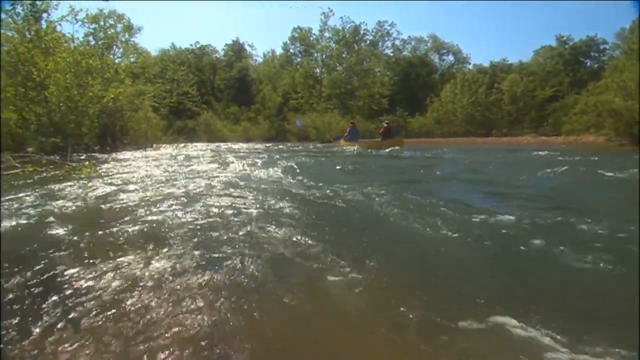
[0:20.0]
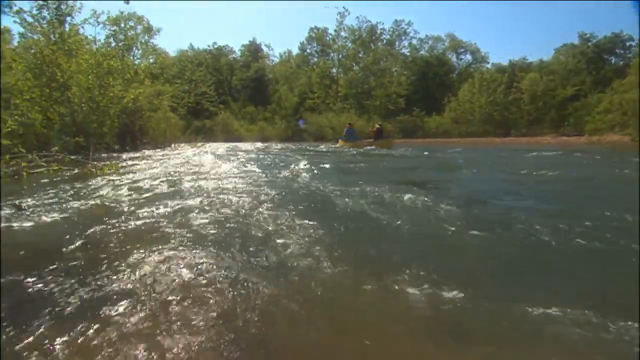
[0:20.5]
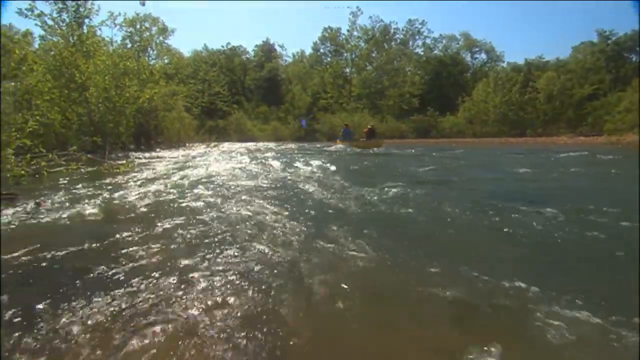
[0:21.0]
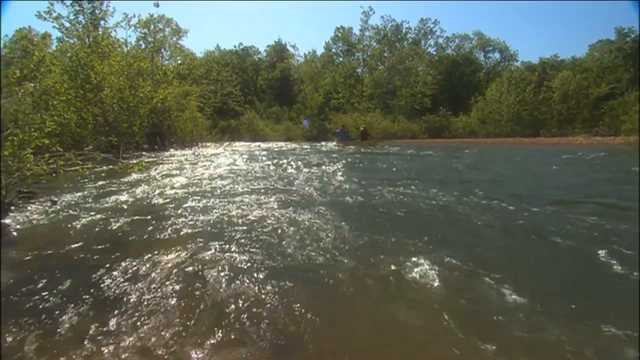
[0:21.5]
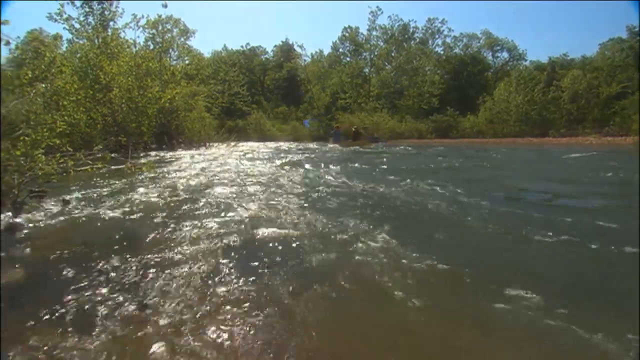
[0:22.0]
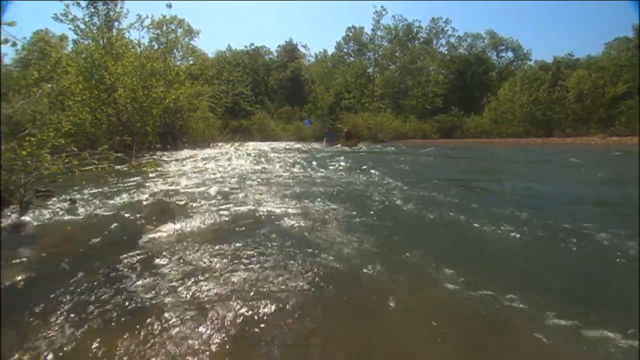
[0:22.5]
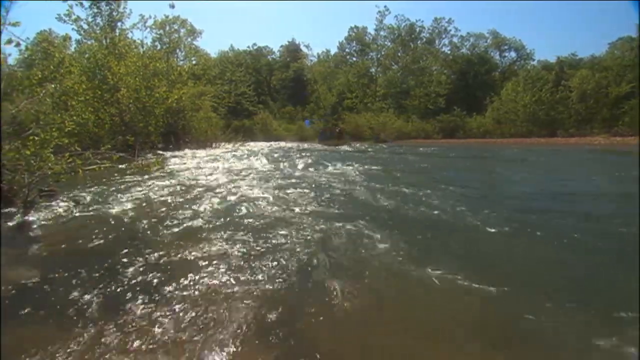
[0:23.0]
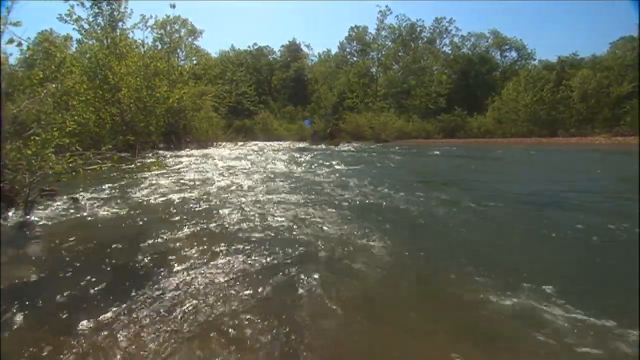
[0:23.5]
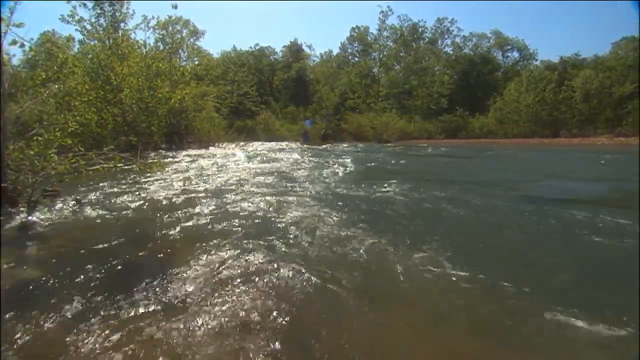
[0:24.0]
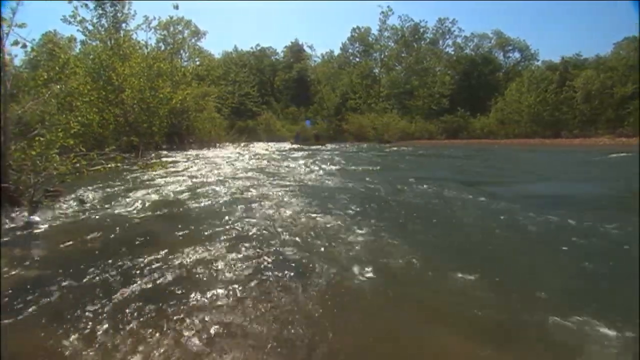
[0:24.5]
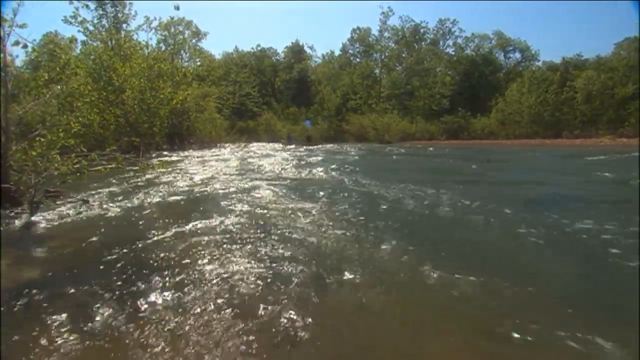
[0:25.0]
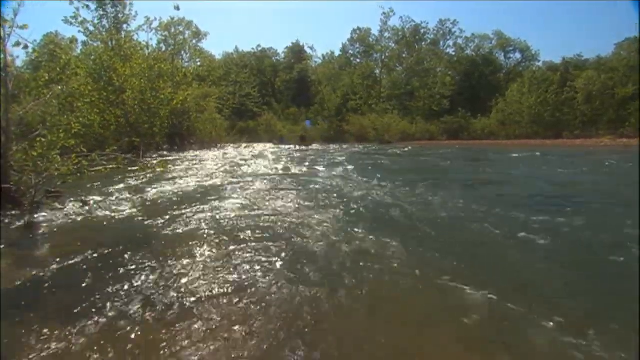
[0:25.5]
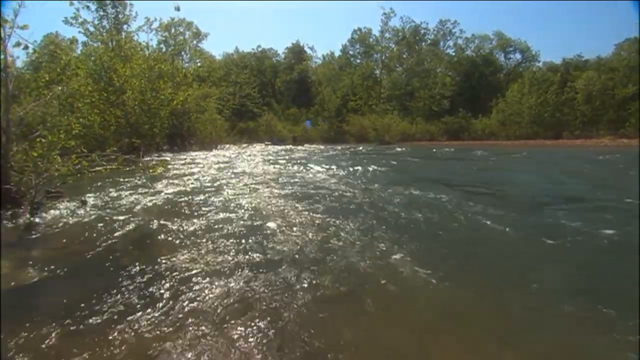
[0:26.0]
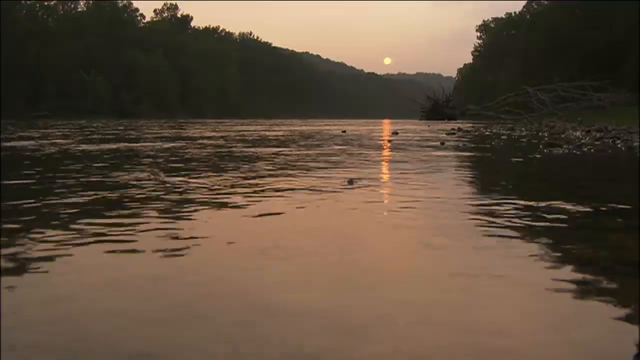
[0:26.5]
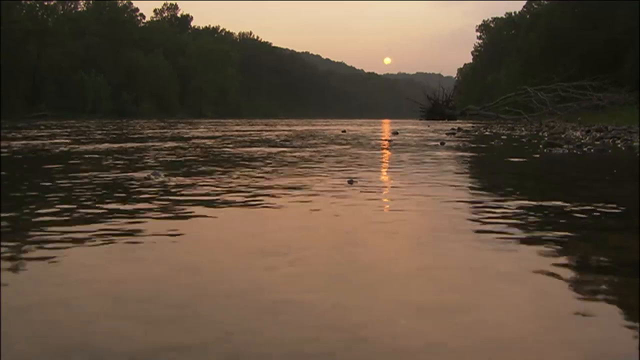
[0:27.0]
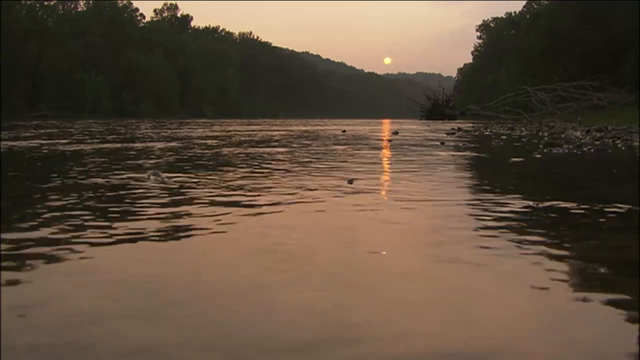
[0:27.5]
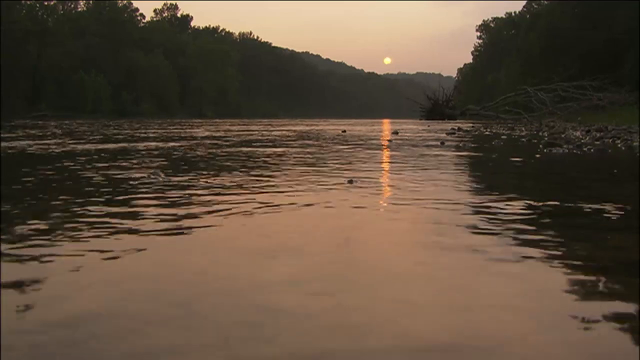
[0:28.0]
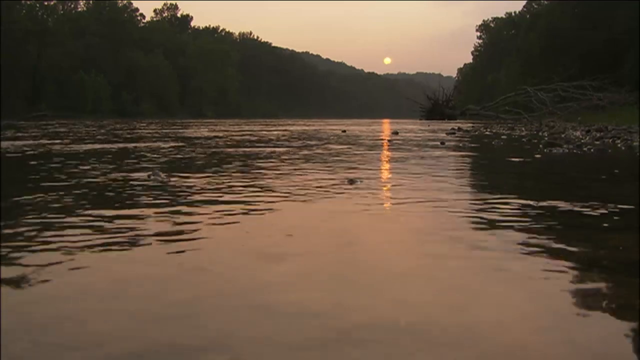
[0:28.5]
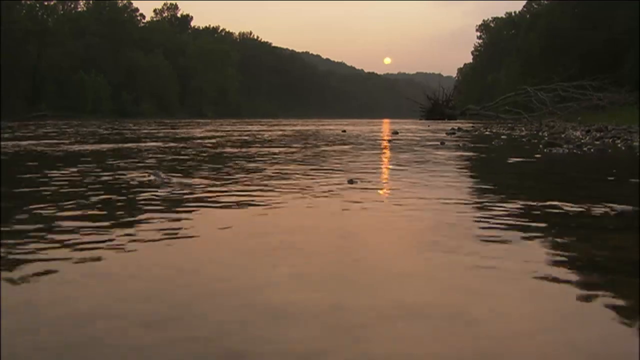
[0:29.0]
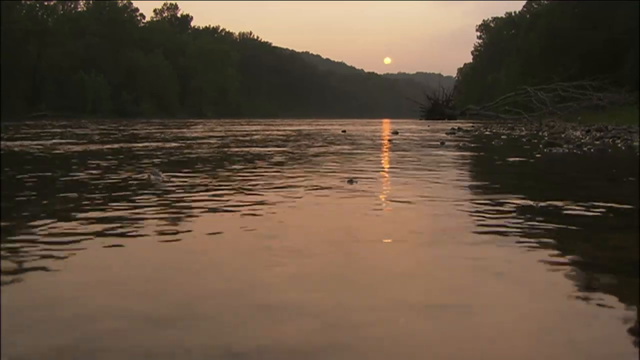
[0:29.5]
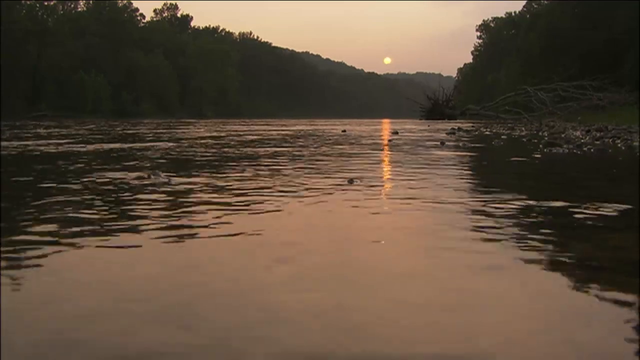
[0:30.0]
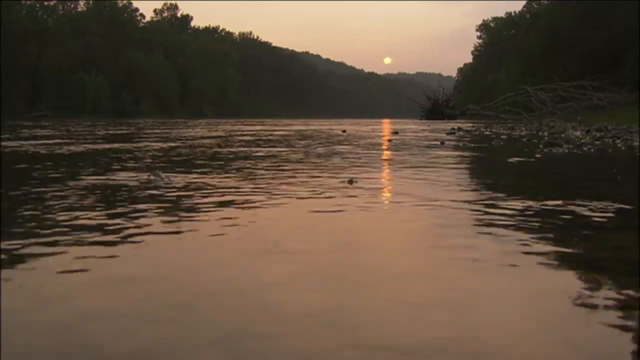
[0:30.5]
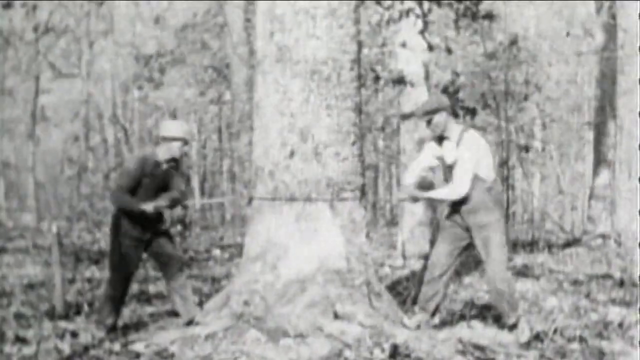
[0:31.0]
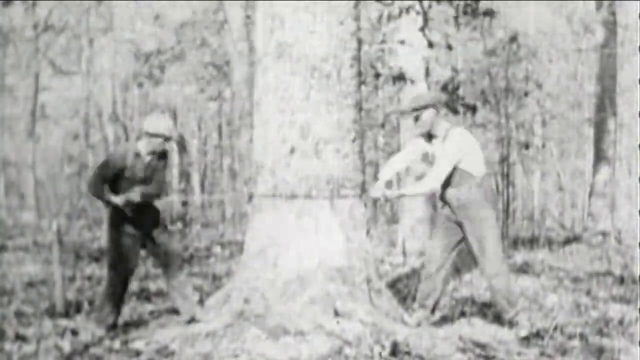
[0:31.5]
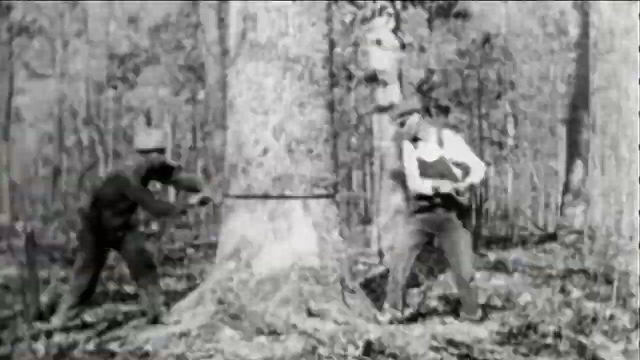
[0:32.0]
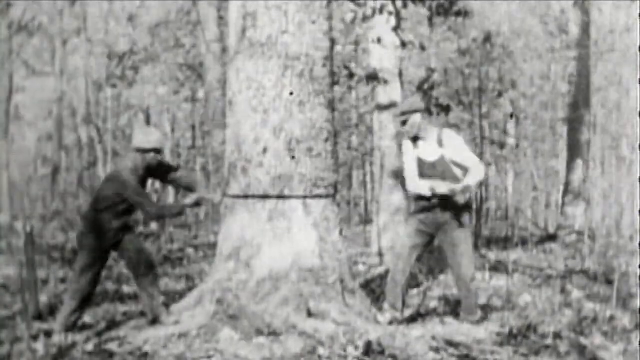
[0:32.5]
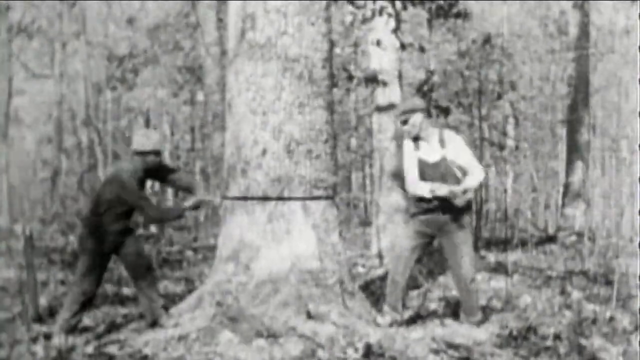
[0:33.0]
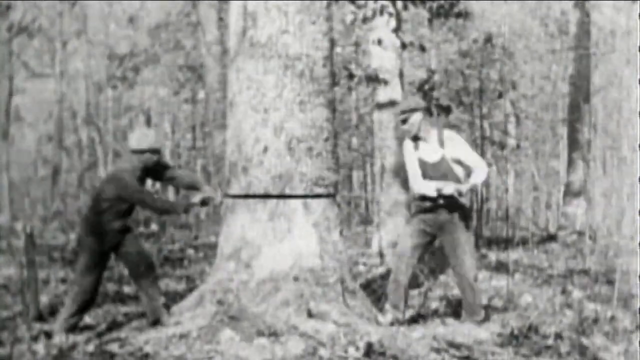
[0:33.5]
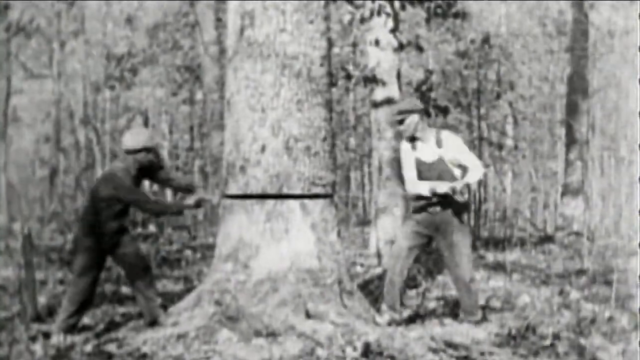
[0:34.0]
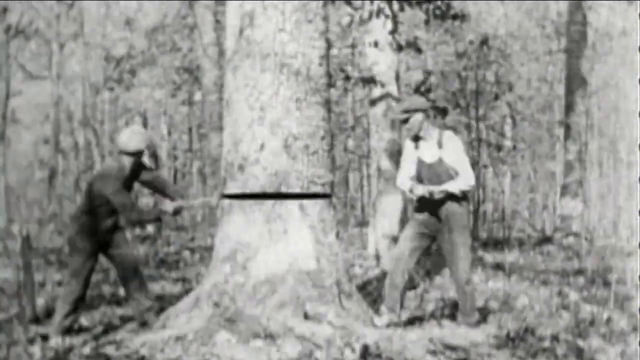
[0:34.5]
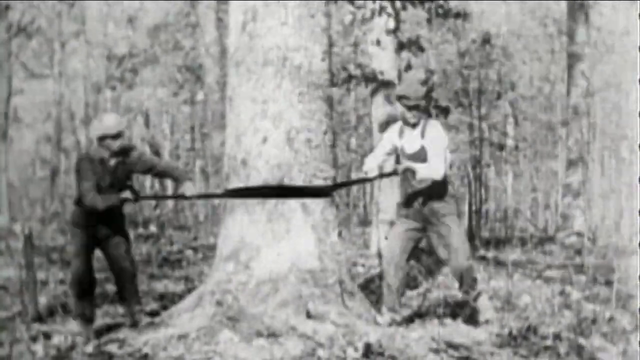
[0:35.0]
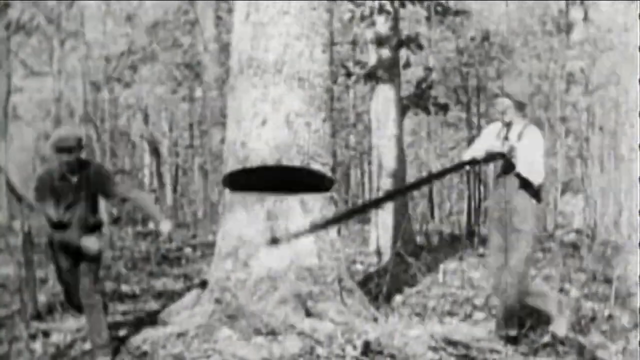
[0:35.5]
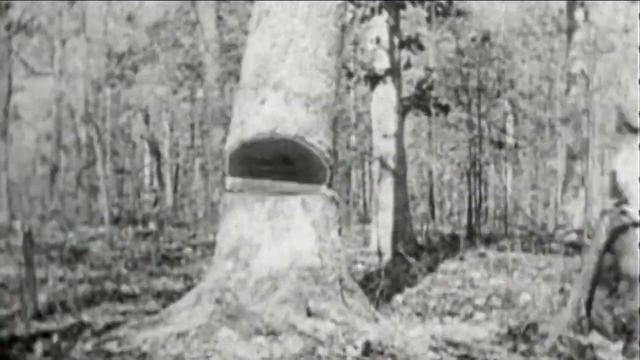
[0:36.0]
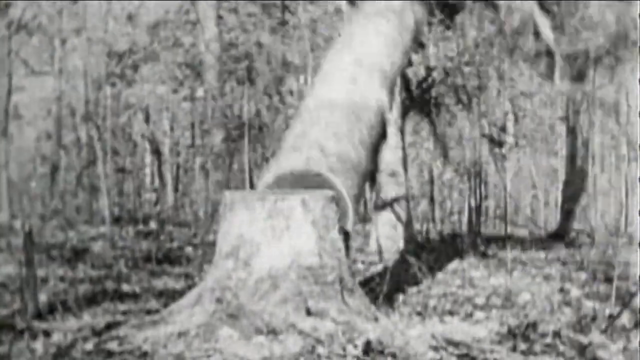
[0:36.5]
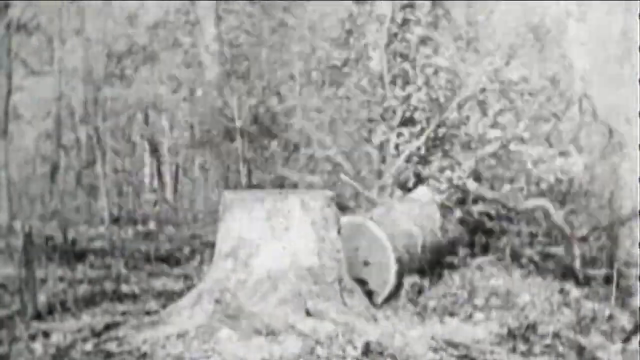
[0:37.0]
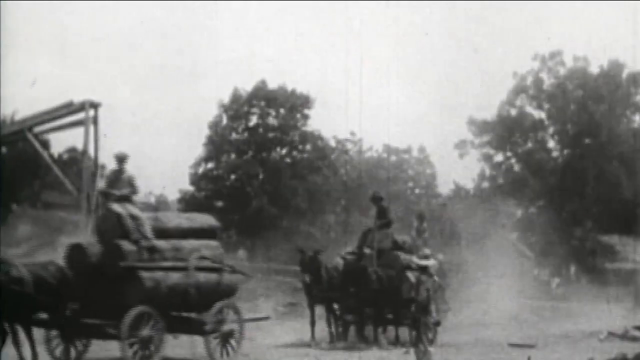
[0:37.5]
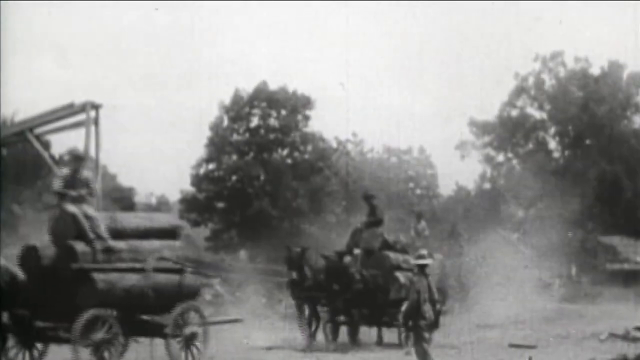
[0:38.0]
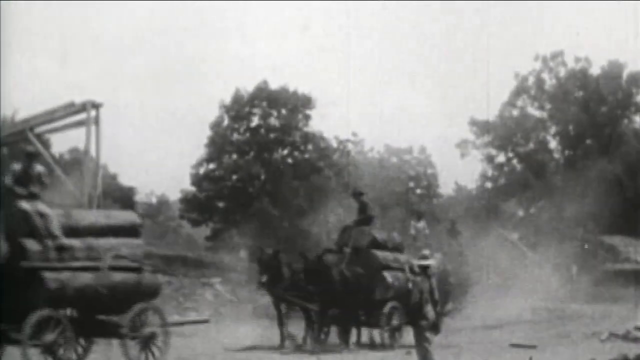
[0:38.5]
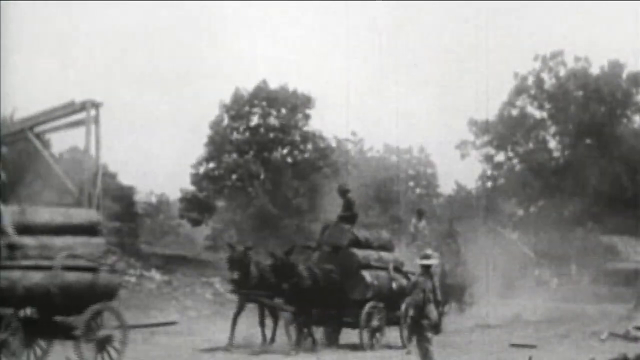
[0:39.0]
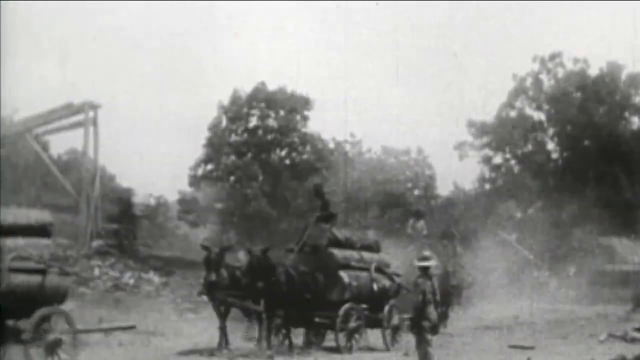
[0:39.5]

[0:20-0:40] The two men in the canoe continue downstream, flowing with the current. Next, there is an image of just a body of water, where the sun appears to be setting; ripples show on the water, possibly from animals. Then a black-and-white video shows two men in overalls cutting down a tree, each holding one end of a big saw, until the tree finally falls over. After that, some people on a horse appear; they look like they are chopping down more trees and gathering the trees and logs together.